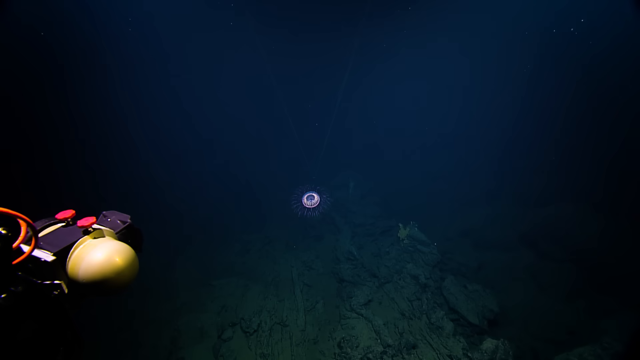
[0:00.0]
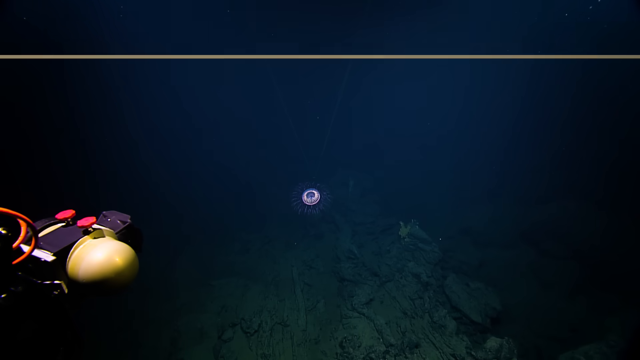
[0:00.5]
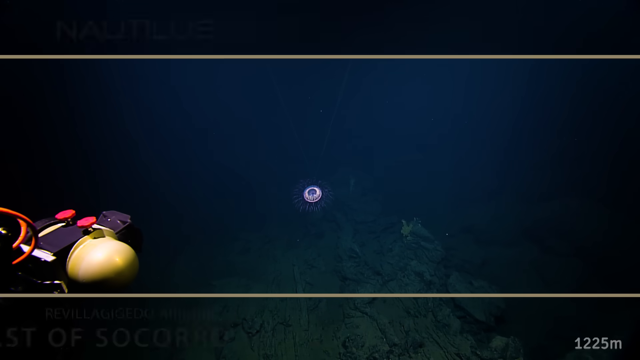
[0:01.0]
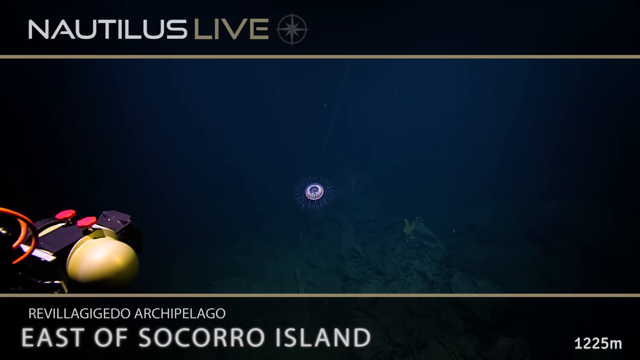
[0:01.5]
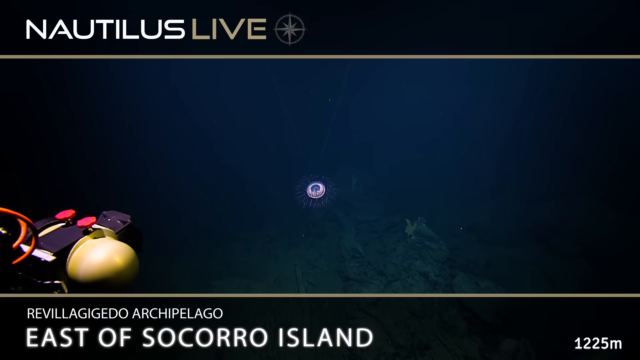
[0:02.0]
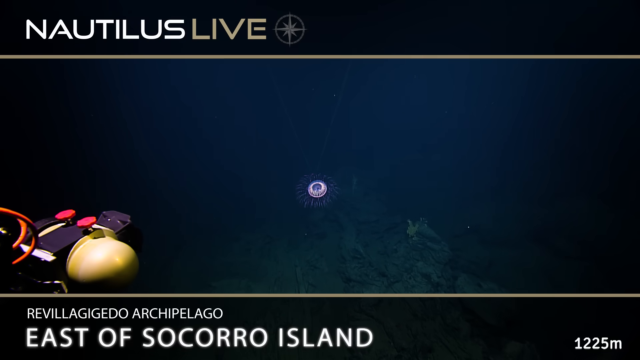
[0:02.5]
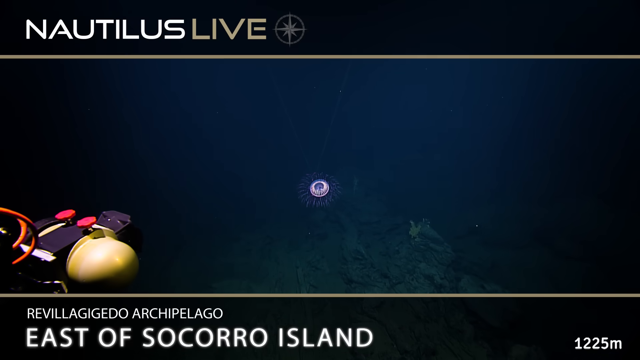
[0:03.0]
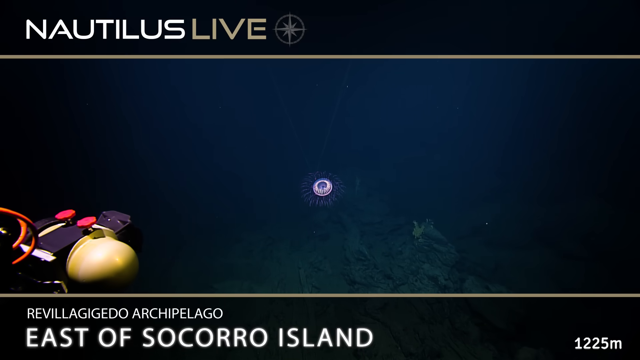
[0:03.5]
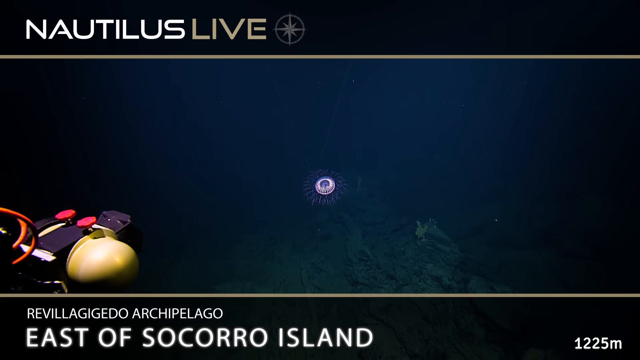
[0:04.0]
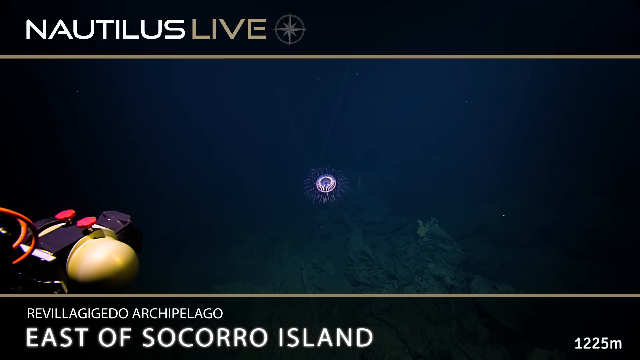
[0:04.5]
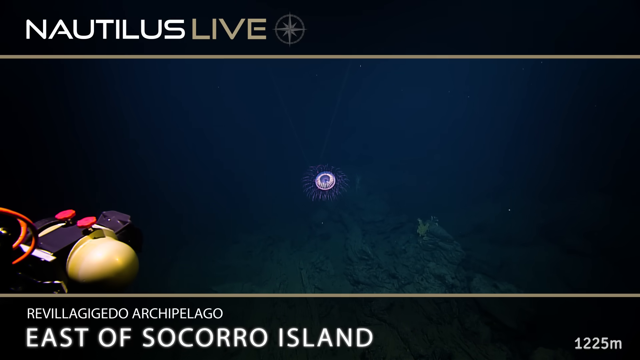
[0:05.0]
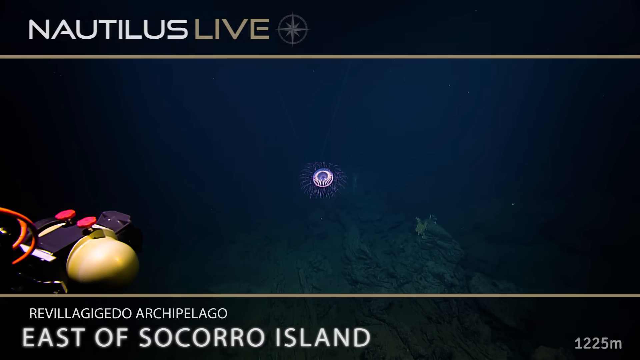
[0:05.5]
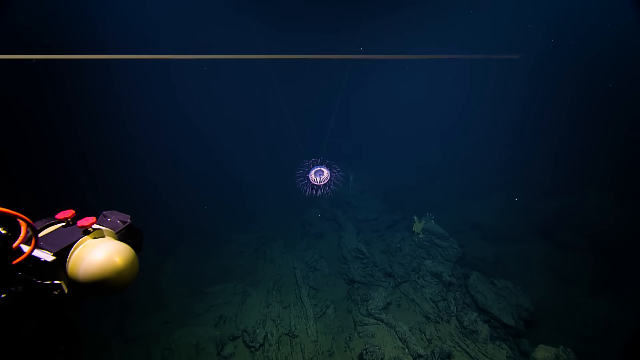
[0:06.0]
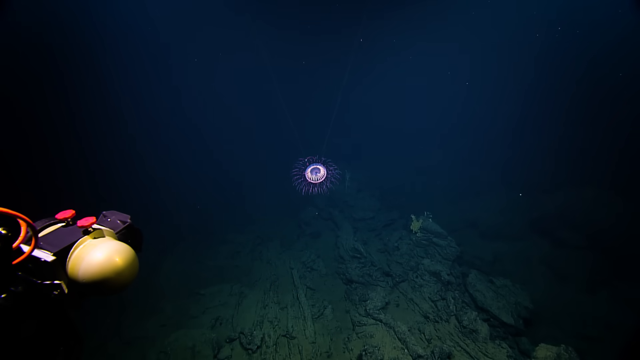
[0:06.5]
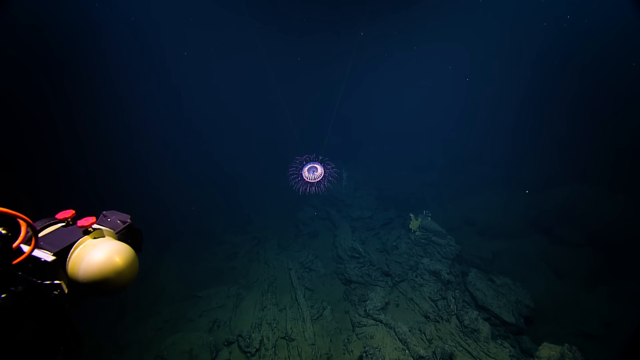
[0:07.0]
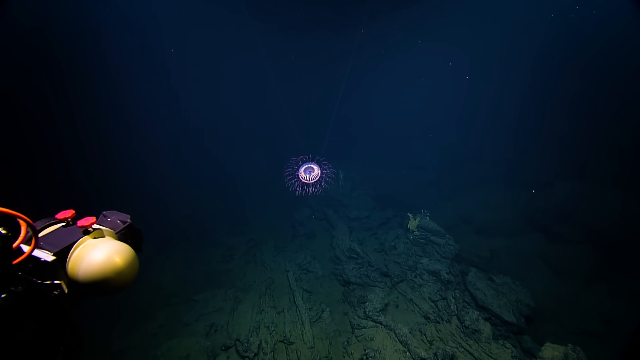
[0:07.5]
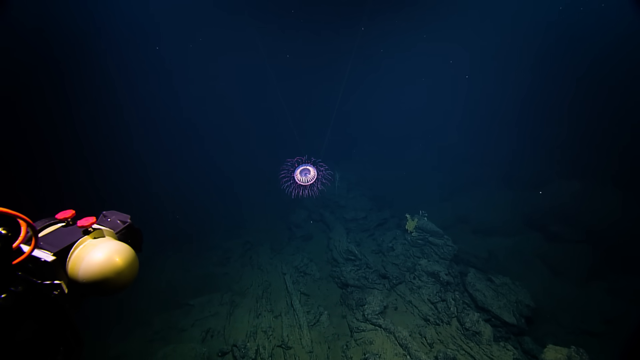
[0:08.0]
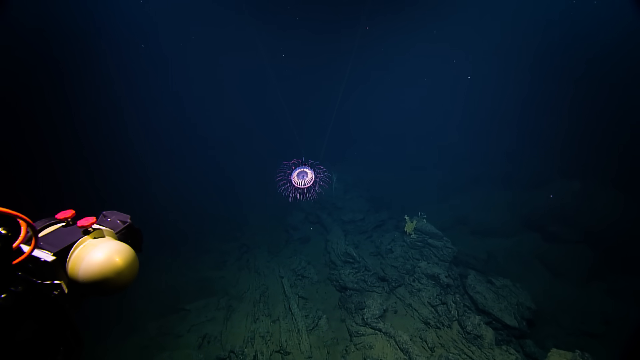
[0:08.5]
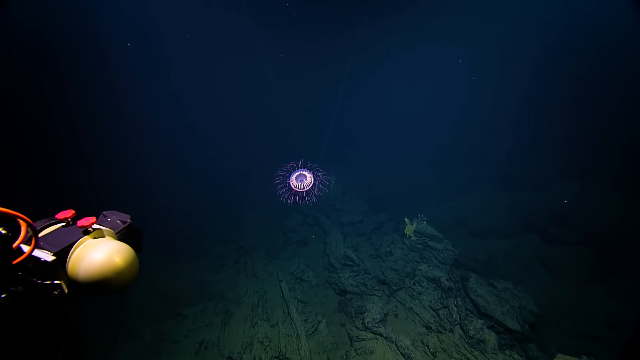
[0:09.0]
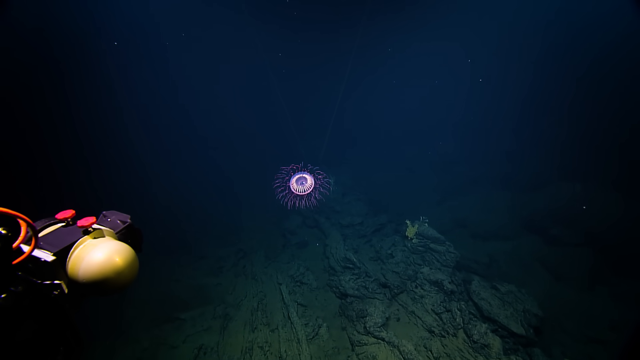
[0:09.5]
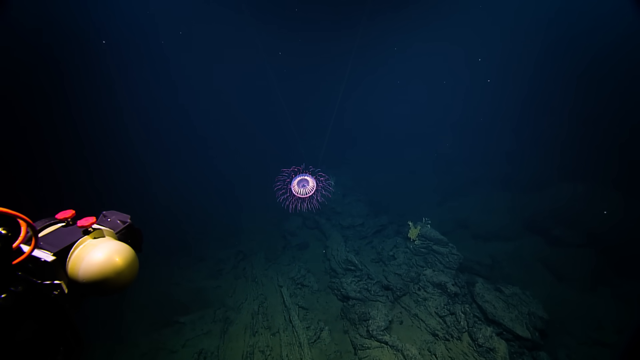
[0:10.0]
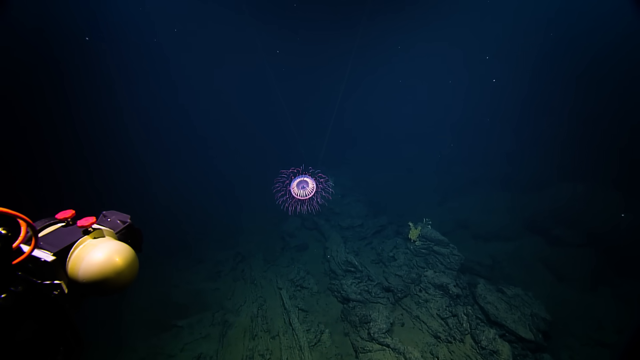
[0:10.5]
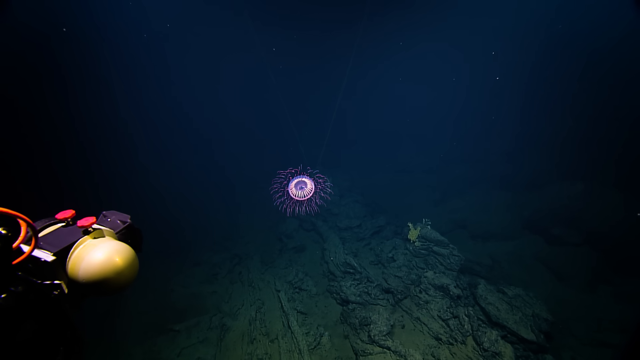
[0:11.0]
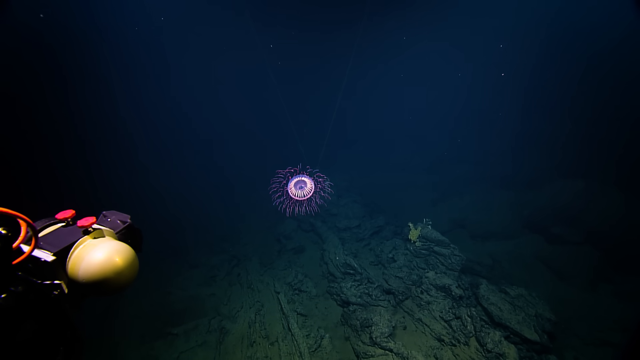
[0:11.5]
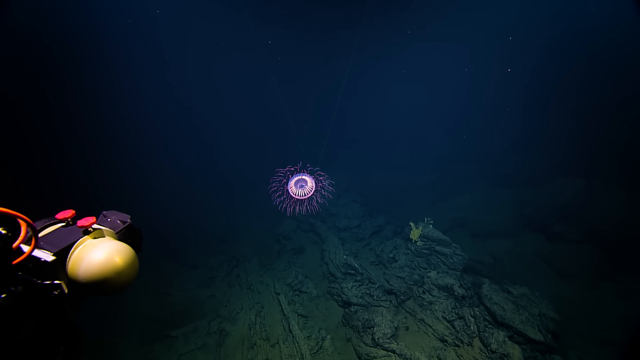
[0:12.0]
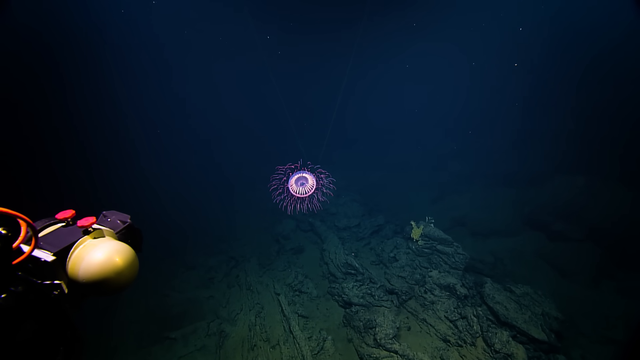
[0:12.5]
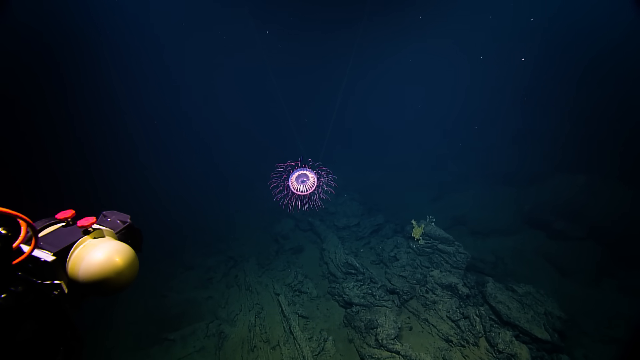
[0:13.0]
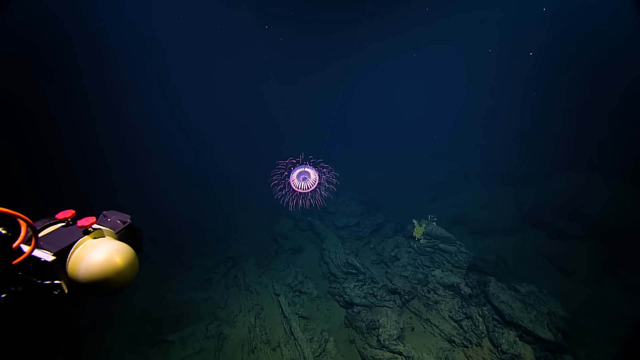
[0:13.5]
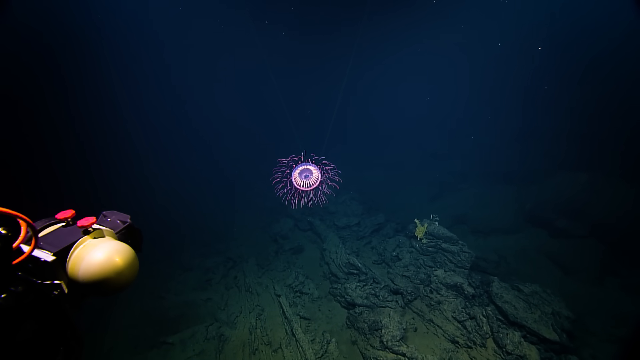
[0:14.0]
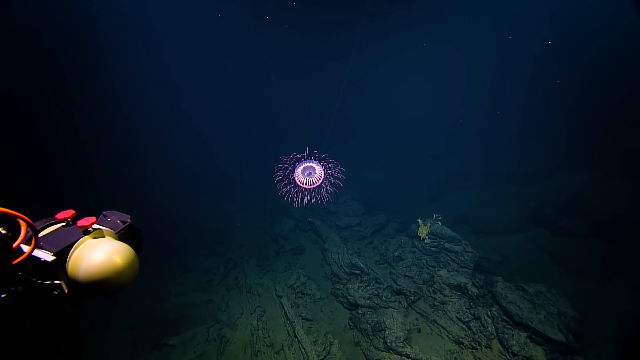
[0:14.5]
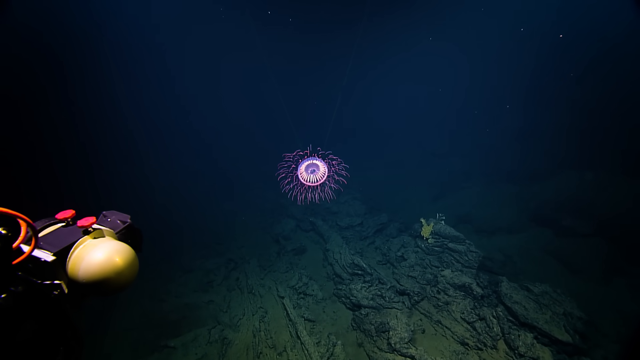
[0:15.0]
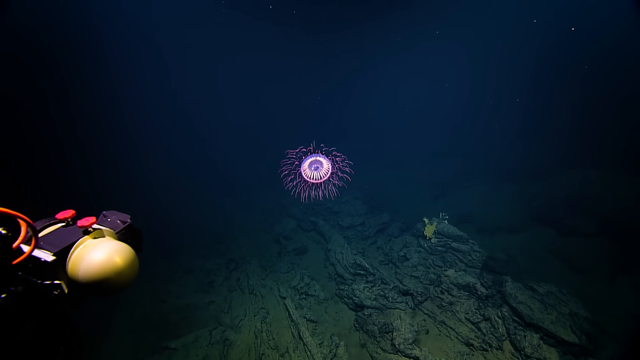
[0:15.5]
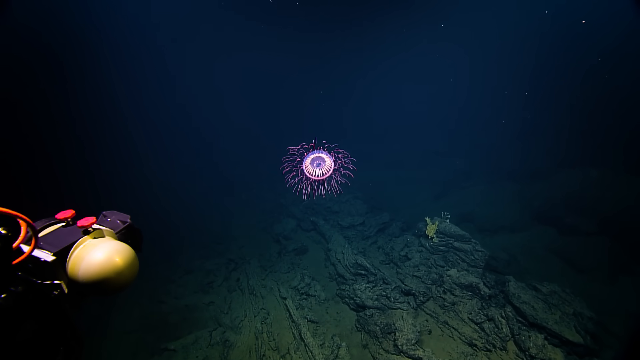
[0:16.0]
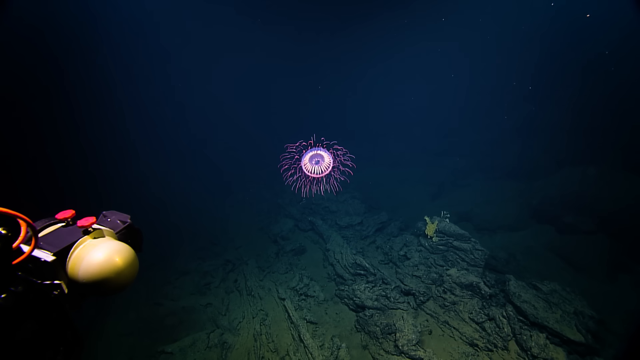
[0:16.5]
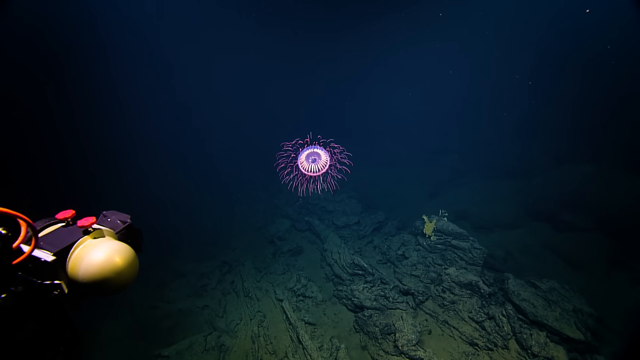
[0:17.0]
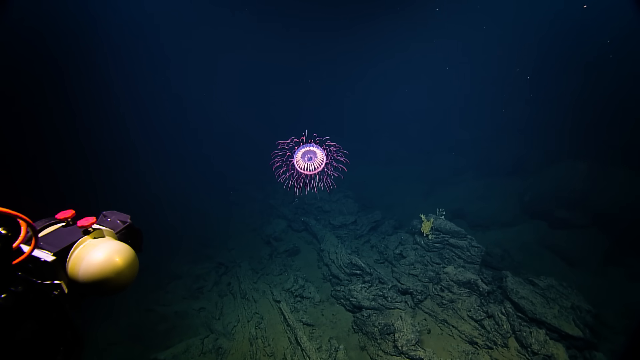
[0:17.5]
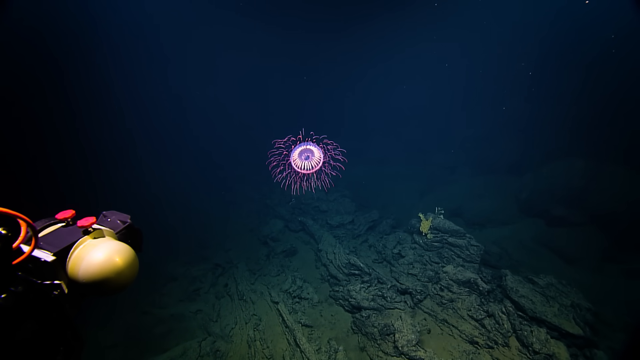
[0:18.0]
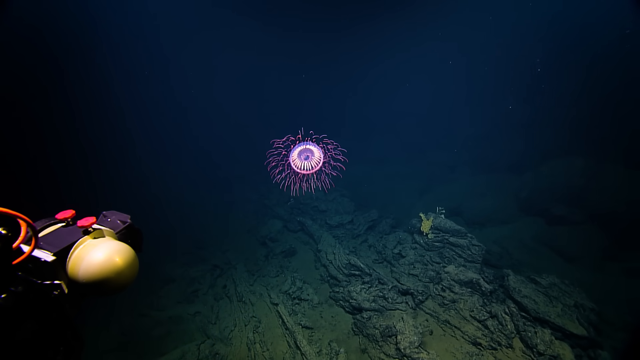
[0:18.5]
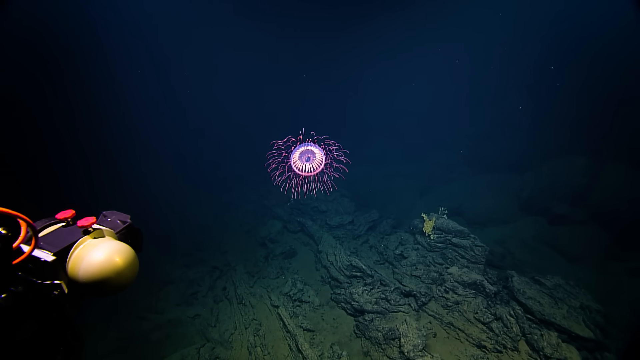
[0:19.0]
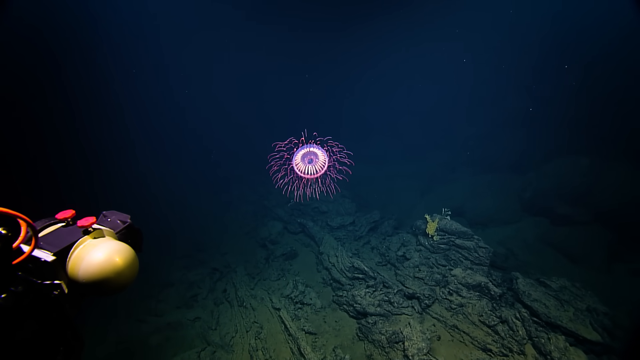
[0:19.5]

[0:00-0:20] A purple jellyfish is in the dead middle of the screen. There are black borders at the top of the screen and a black banner at the bottom. In the top right corner, text reads "Nautilus Live" next to a small emblem that looks like a compass; "Nautilus" is written in white and "Live" in a dim bronze color. In the bottom left corner there is what looks like some kind of scuba gear, a gadget with two red things that look like buttons. The camera moves very slowly, apparently zooming in slowly, maybe focusing on the purple jellyfish-looking object in the middle; although the frame looks like a still image, the slow zoom has a floaty effect. Some rocks are visible, and it looks like the scene is on the ocean floor. Text pops in at the bottom of the screen reading "Revillagigedo Archipelago" and "east of Socorro Island".